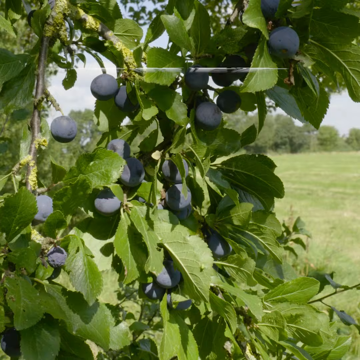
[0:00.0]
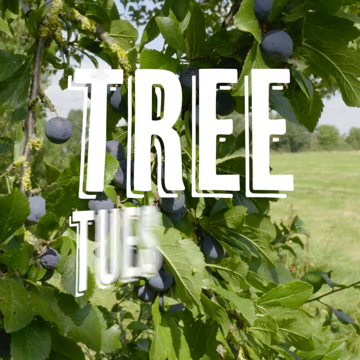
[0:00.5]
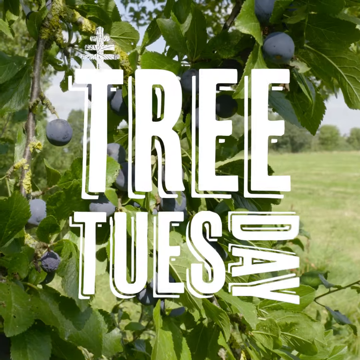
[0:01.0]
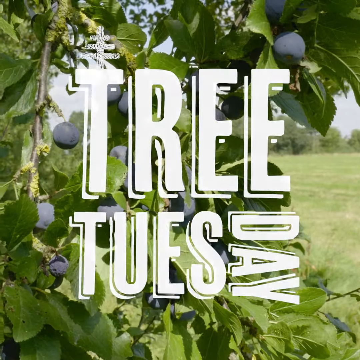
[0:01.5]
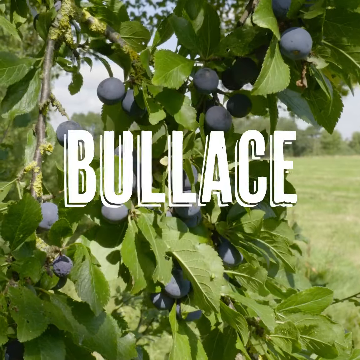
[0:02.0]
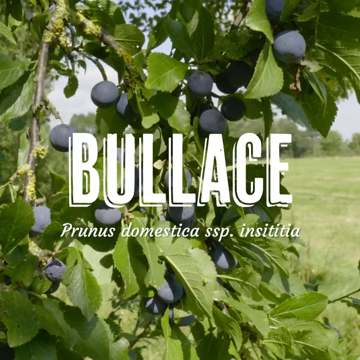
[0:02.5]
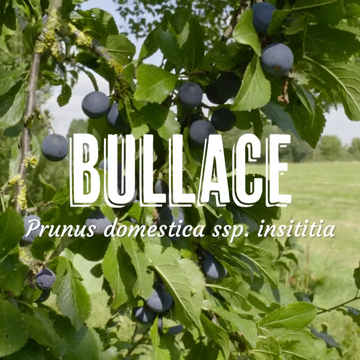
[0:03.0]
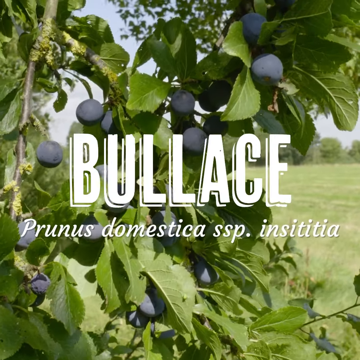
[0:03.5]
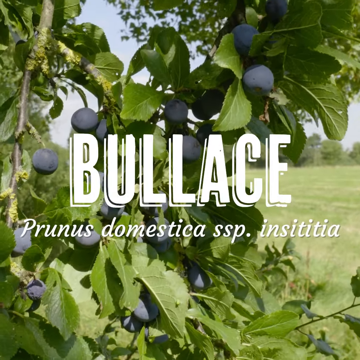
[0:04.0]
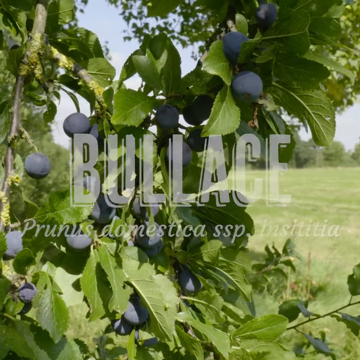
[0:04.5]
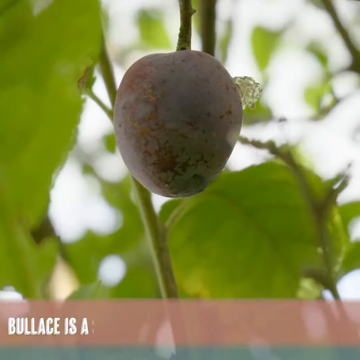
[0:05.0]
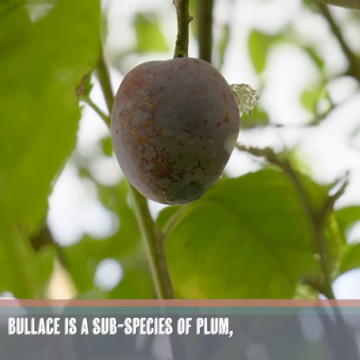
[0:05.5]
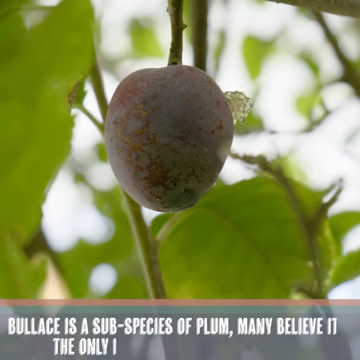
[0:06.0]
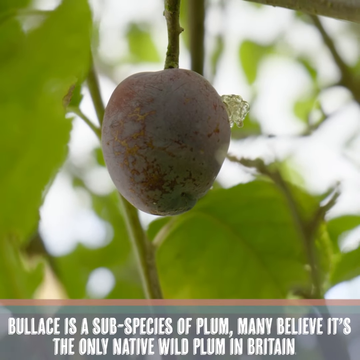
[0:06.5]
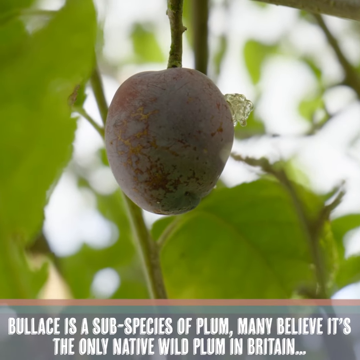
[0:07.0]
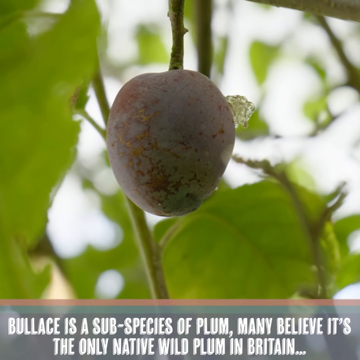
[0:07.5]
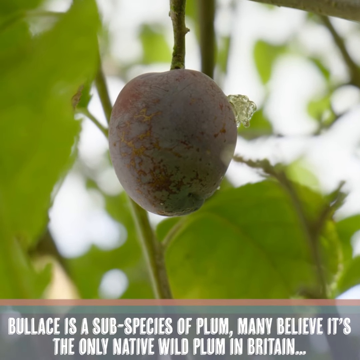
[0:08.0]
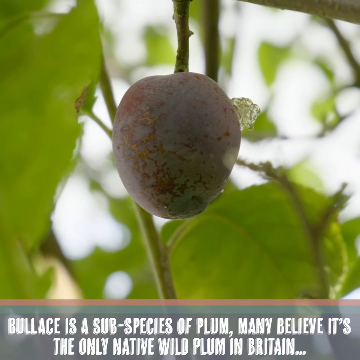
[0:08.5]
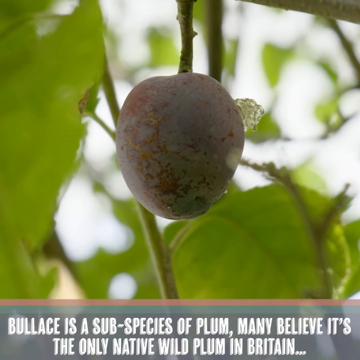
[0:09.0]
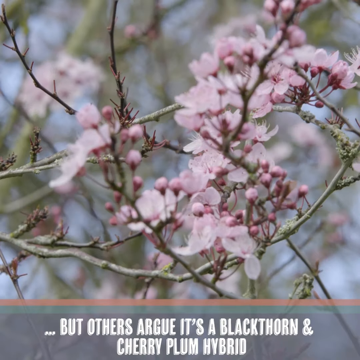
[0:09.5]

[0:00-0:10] The view is focused on a tree with green leaves and quite a few fruits hanging from it; they look kind of like plums but are a purplish blue color. In the background is a very large manicured lawn, and beyond that an area of trees. Text over the view reads "Tree Tuesday," with "Tues" spelled T-U-E-S and "day" written vertically next to the S. That text disappears and new text reads "Bolus," with "Prunus Domestica SSP Institutia" beneath it. The view then focuses in on a single fruit, and text at the bottom of the screen reads "Bolus is a subspecies of plum. Many believe it's the only native wild plum in Britain." Next a cherry blossom tree appears, with text underneath reading "but others argue it's a blackthorn and cherry plum hybrid."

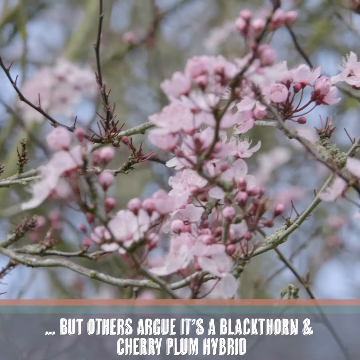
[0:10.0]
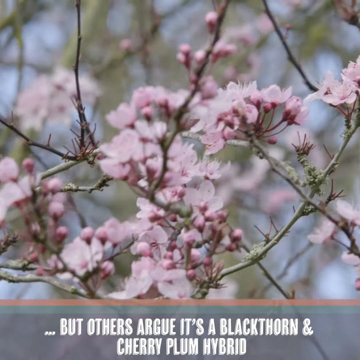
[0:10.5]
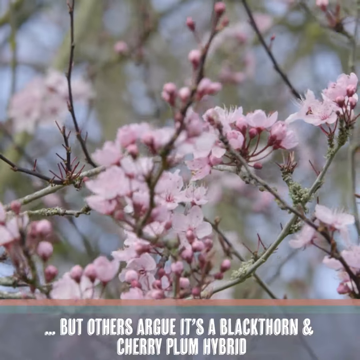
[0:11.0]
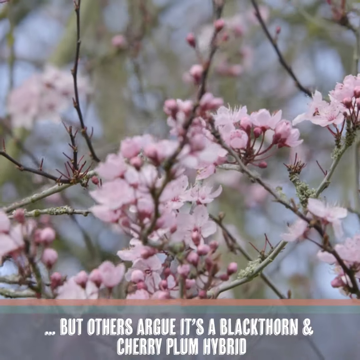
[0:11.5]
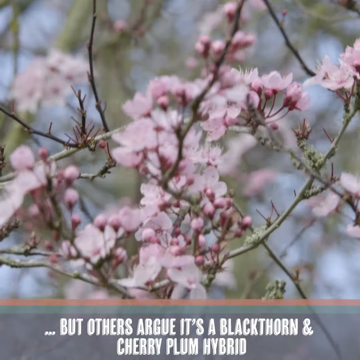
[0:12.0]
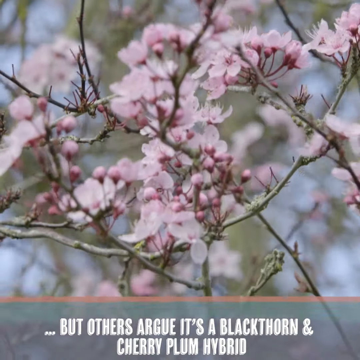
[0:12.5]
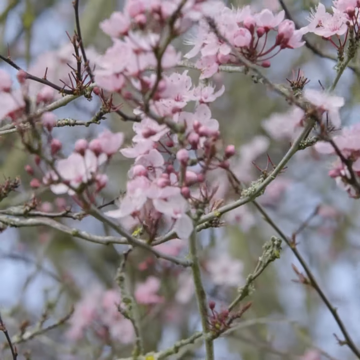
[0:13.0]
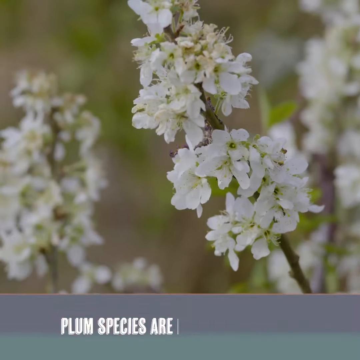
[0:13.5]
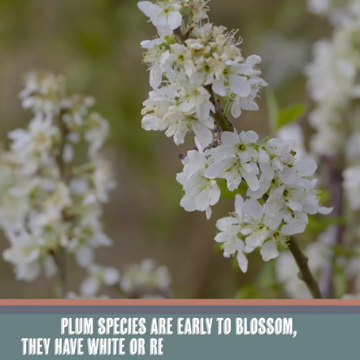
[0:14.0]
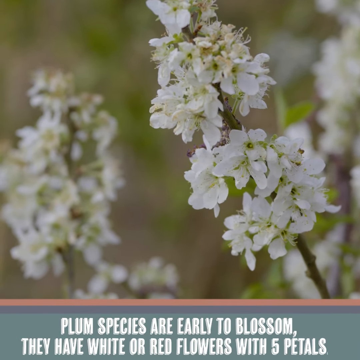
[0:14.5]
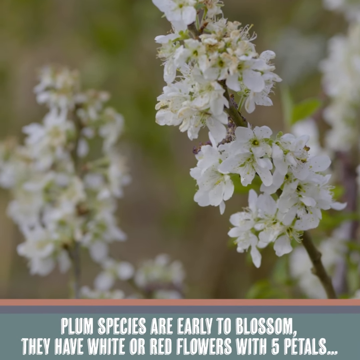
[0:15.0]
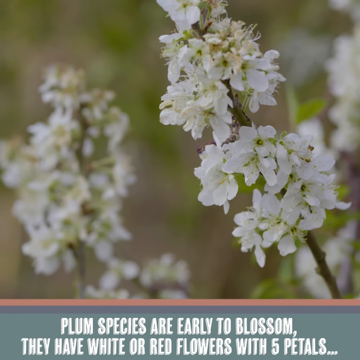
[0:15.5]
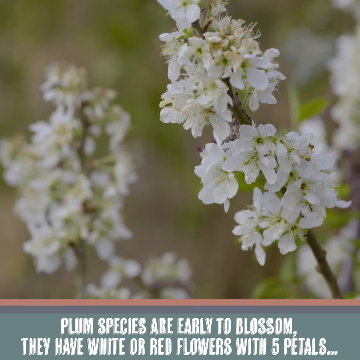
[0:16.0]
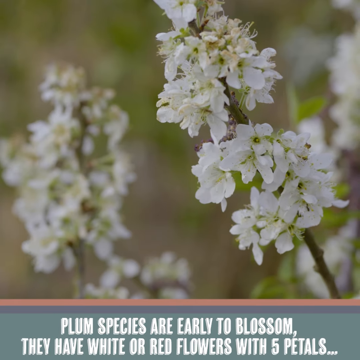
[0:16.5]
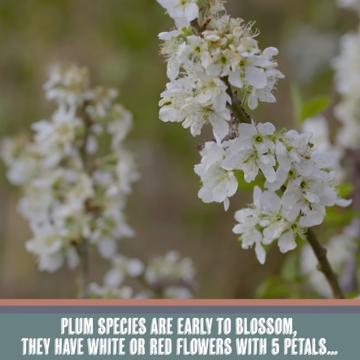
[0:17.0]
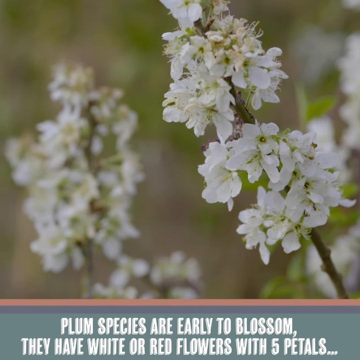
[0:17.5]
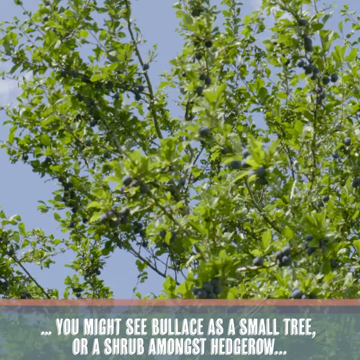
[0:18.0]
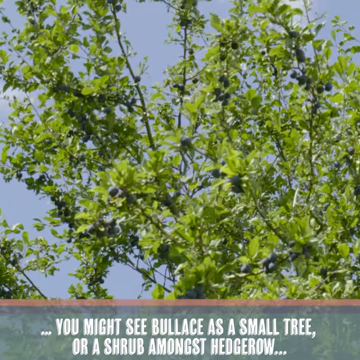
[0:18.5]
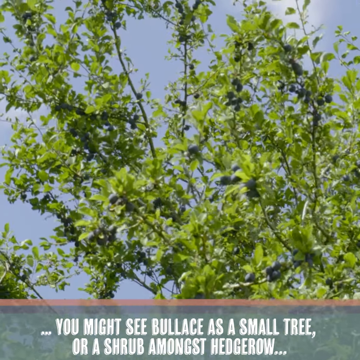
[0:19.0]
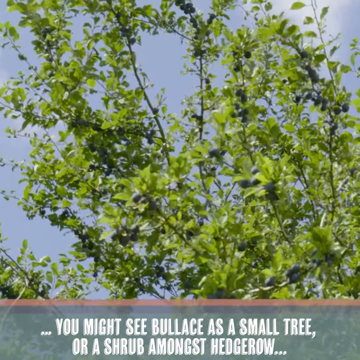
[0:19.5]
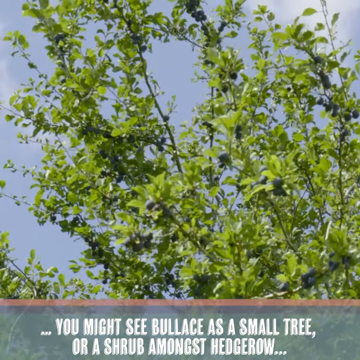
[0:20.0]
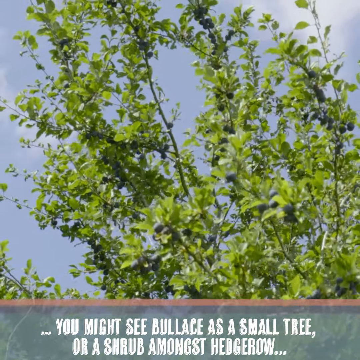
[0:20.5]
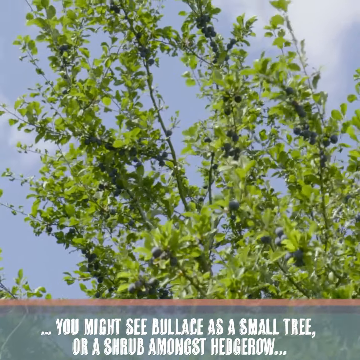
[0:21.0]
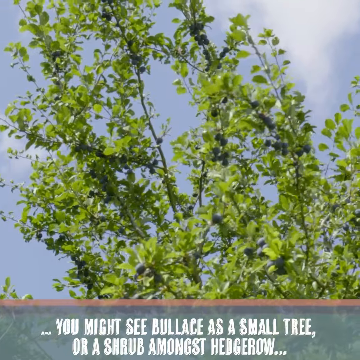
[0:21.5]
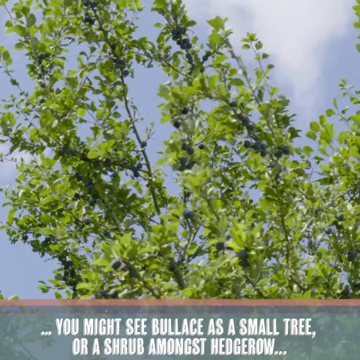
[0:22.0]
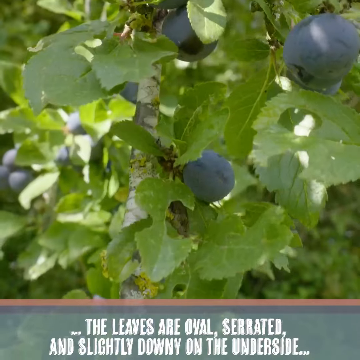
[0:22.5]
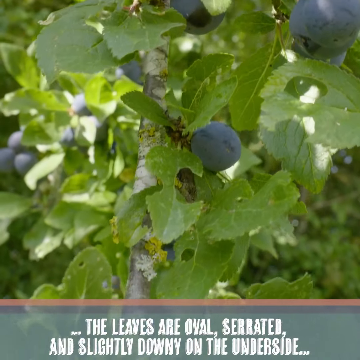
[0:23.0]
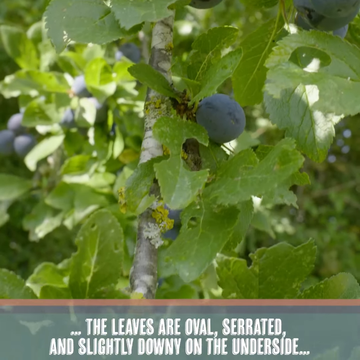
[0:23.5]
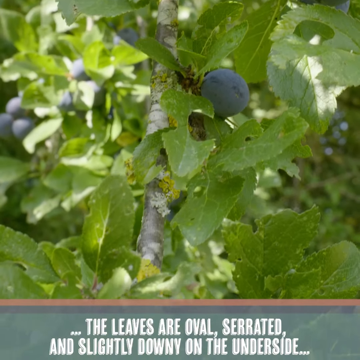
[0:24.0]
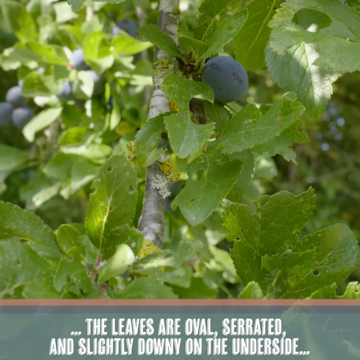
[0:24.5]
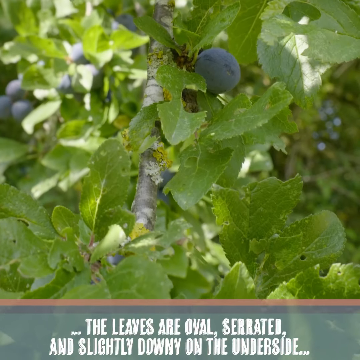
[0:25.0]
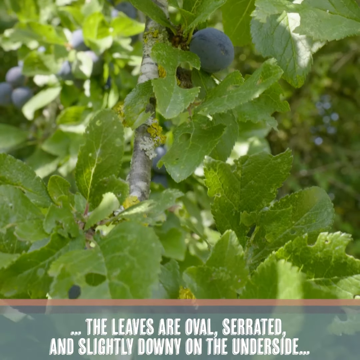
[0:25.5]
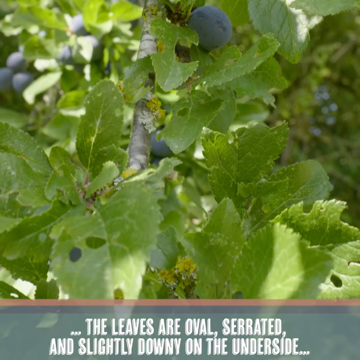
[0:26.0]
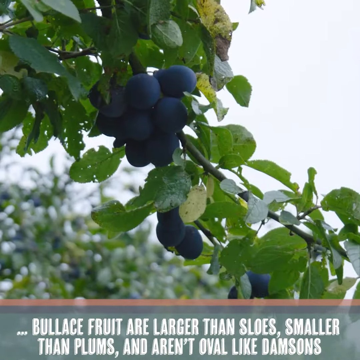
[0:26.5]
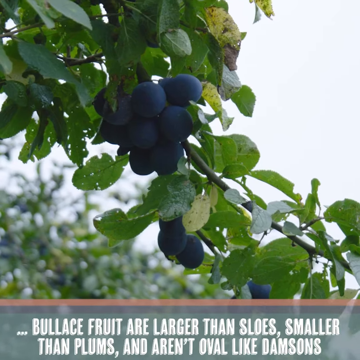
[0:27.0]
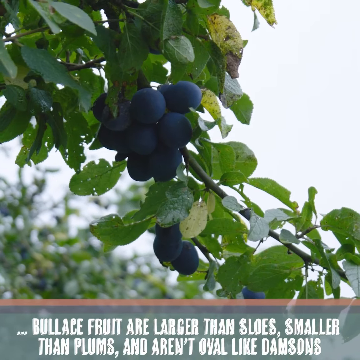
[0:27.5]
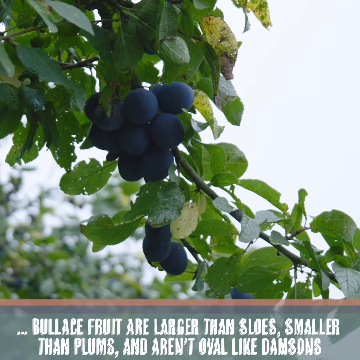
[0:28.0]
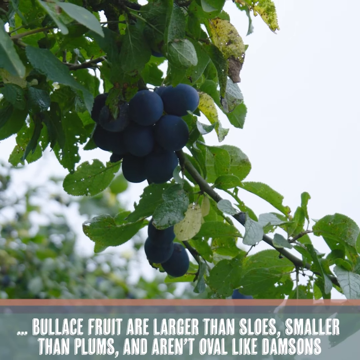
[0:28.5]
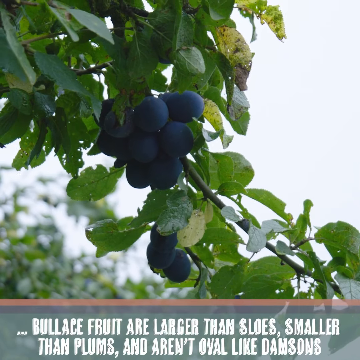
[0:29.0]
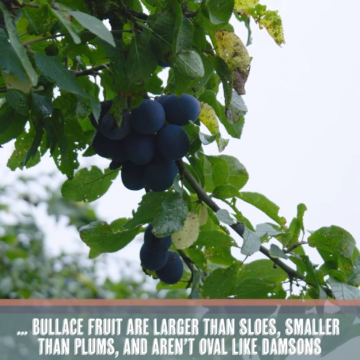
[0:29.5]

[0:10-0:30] A cherry blossom tree is shown with text at the bottom reading "while others argue it's a blackthorn and cherry plum hybrid." Next come white flowers on a long stem, with text underneath: "plum species are early to blossom. They have white or red flowers with five petals." A tree waves in the breeze with the purplish blue plum-like fruit on it, and the text at the bottom reads "you might see bolus as a small tree or a shrub amongst hedgerow." The view gets closer to the tree, showing just several fruit and leaves, with the text "the leaves are oval, serrated, and slightly downy on the underside." A different branch follows with a cluster of about ten plums, then another cluster of three, and the text at the bottom reads "bolus fruit are larger than sloughs, smaller than plums, and aren't oval like damsons."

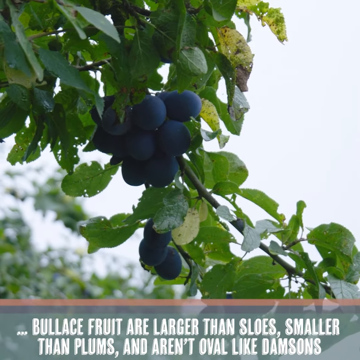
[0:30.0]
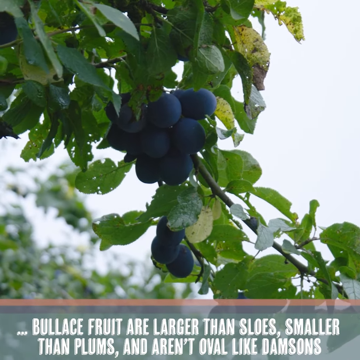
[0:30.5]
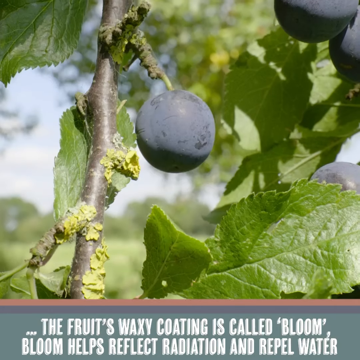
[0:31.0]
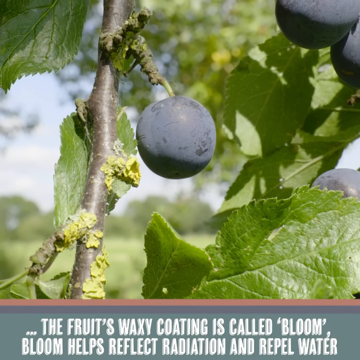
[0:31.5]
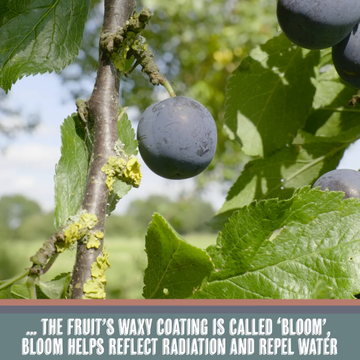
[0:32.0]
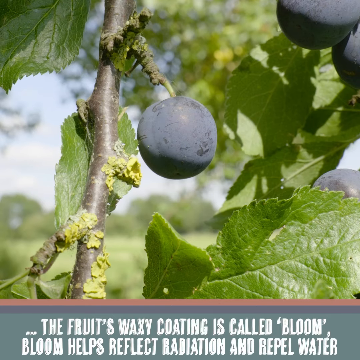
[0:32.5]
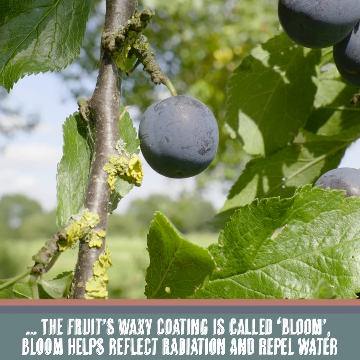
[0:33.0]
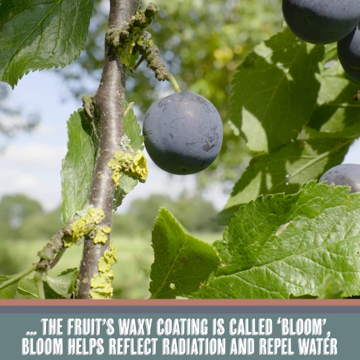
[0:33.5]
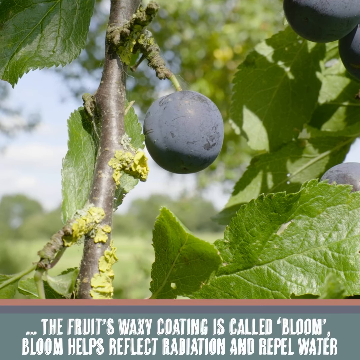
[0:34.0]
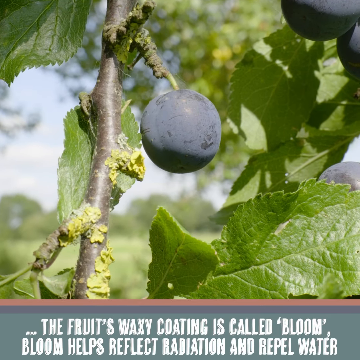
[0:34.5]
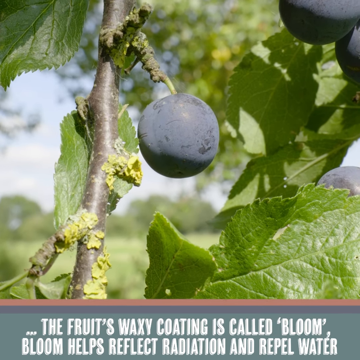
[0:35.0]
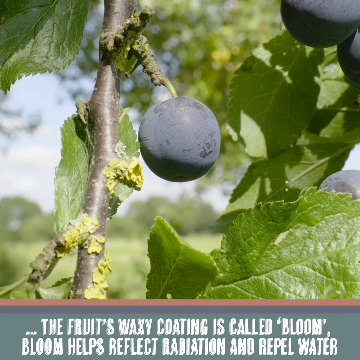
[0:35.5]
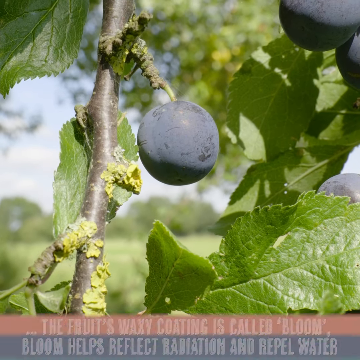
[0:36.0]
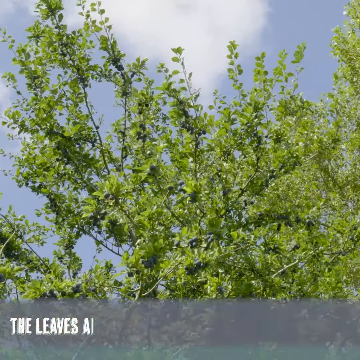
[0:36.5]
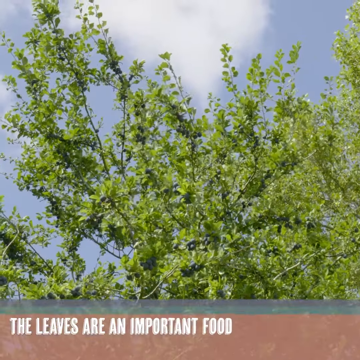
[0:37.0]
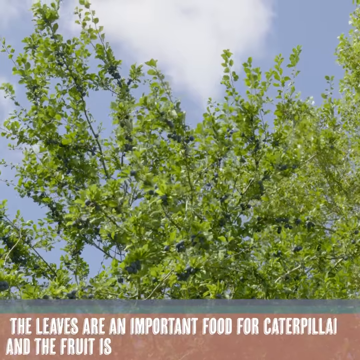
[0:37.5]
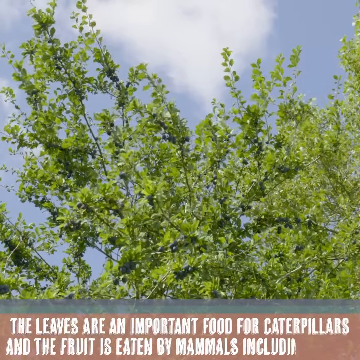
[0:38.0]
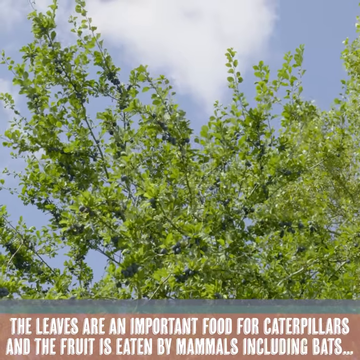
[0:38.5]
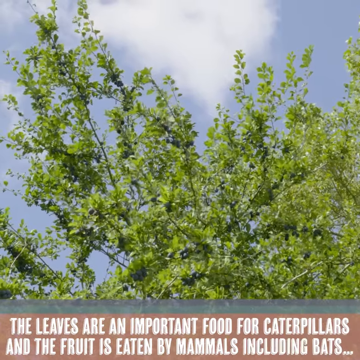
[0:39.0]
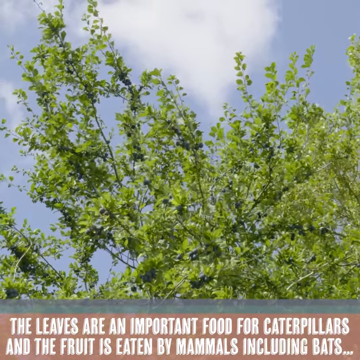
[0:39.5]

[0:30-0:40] A branch shows a cluster of about ten bluish bolus fruit and another cluster of three, with mostly green leaves and a couple of yellow ones; underneath, text reads "bolus fruit are larger than sloughs, smaller than plums, and aren't oval like damsons." Next is a close-up of one fruit, with two more in the upper right corner, and the text at the bottom reads "the fruit's waxy coating is called bloom. Bloom helps reflect radiation and repel water." A view from further away then shows the whole treetop with fruit all over it, and the text underneath reads "the leaves are an important food for caterpillars, and the fruit is eaten by mammals including bats."